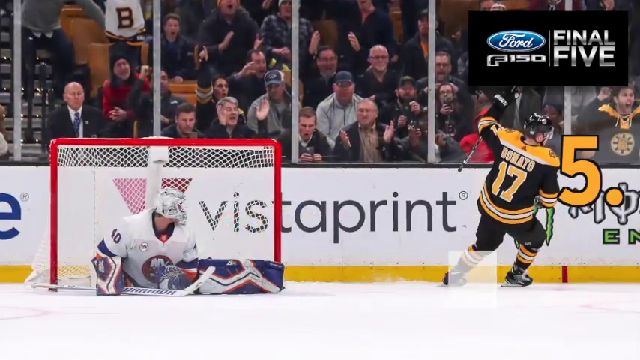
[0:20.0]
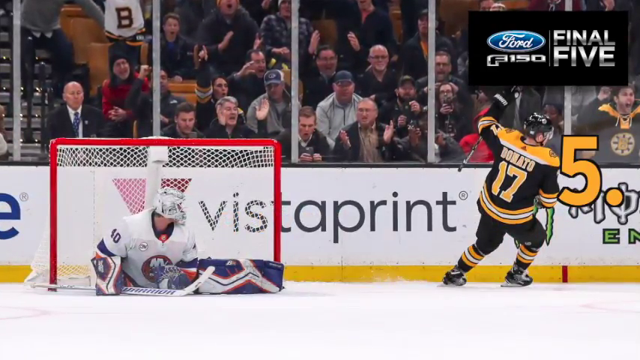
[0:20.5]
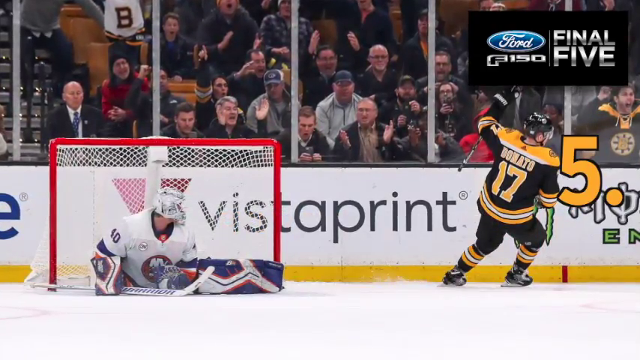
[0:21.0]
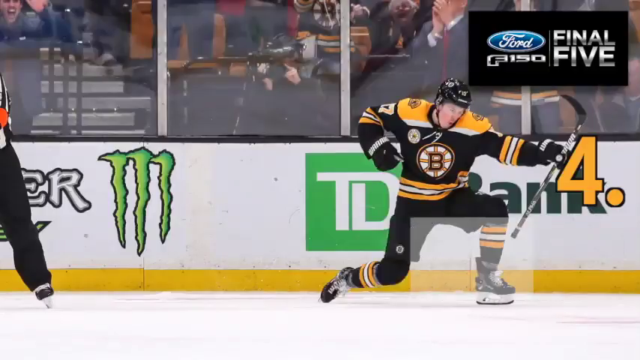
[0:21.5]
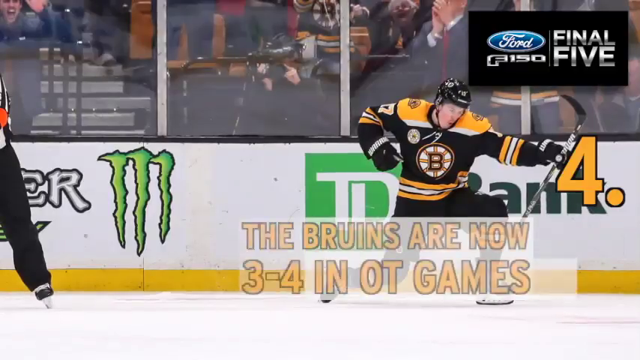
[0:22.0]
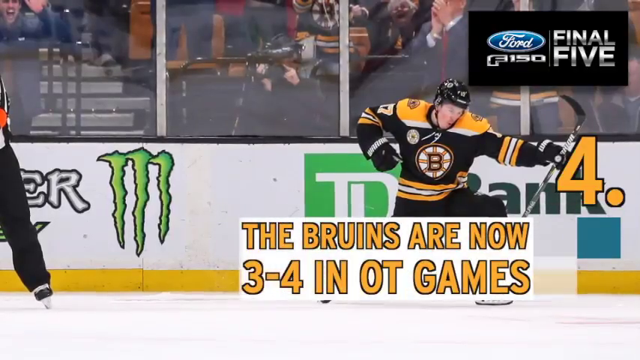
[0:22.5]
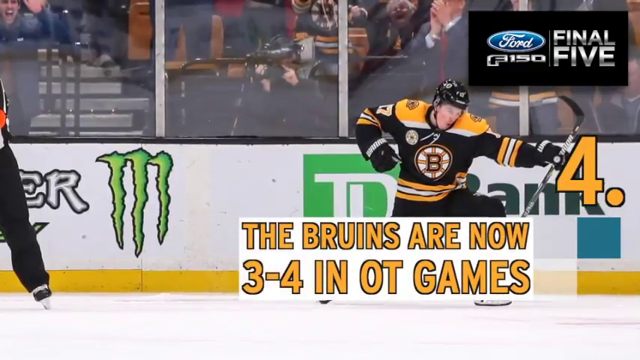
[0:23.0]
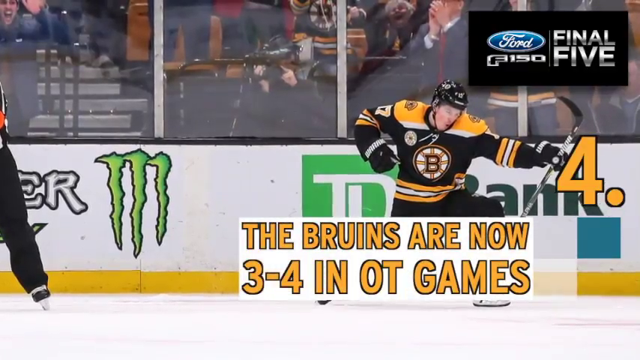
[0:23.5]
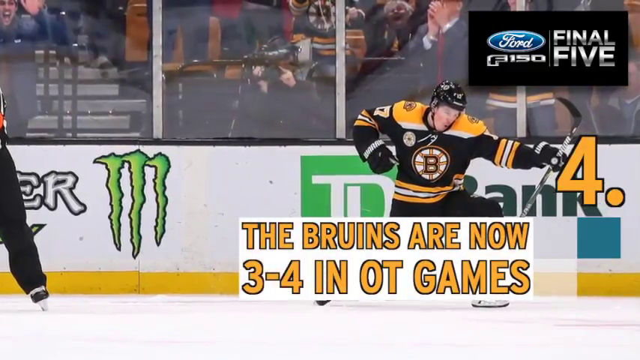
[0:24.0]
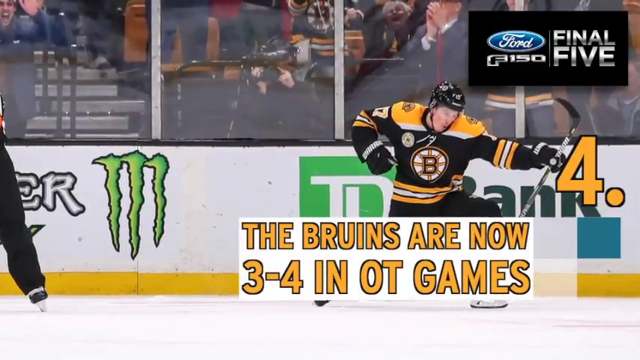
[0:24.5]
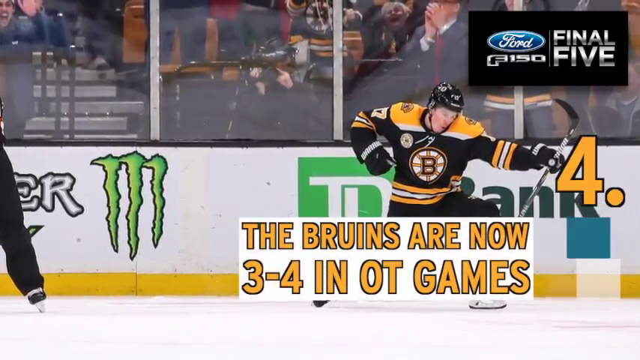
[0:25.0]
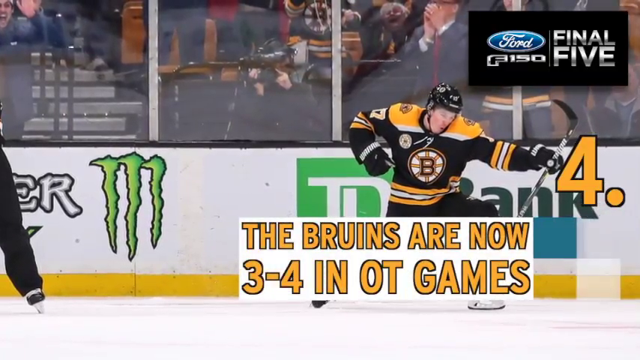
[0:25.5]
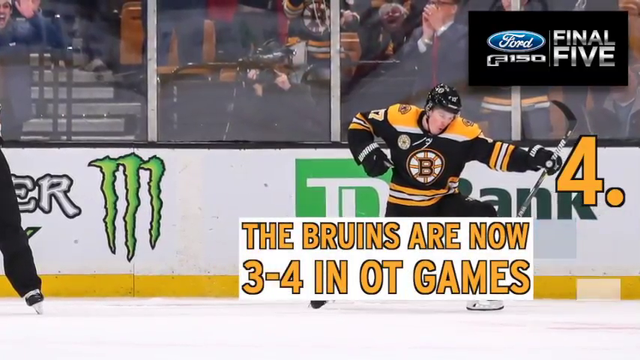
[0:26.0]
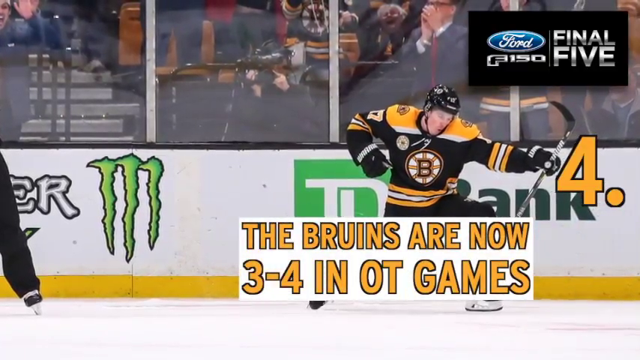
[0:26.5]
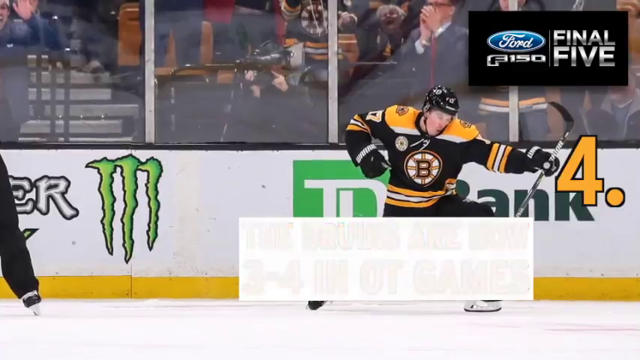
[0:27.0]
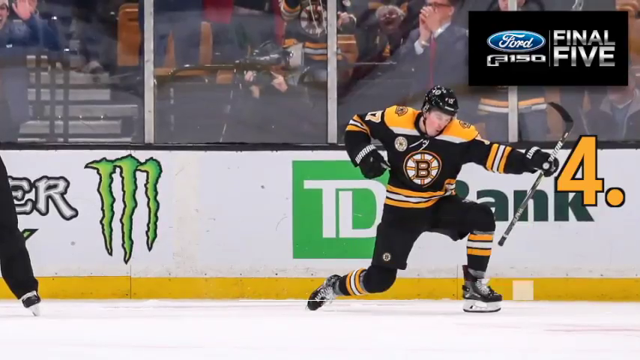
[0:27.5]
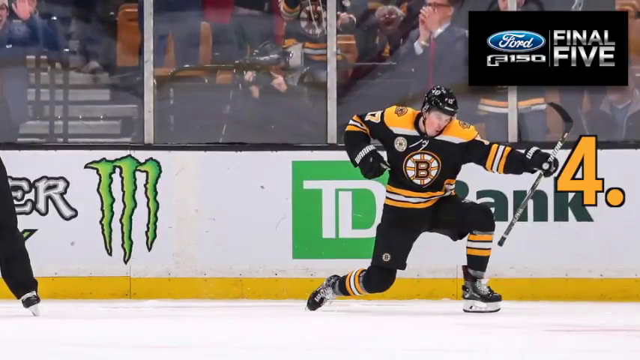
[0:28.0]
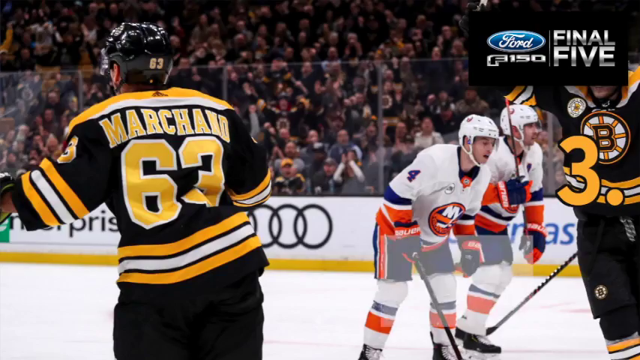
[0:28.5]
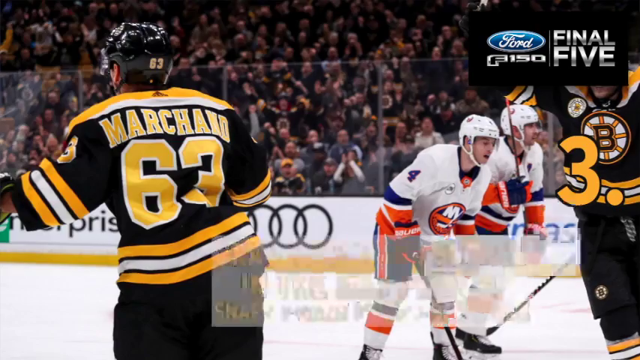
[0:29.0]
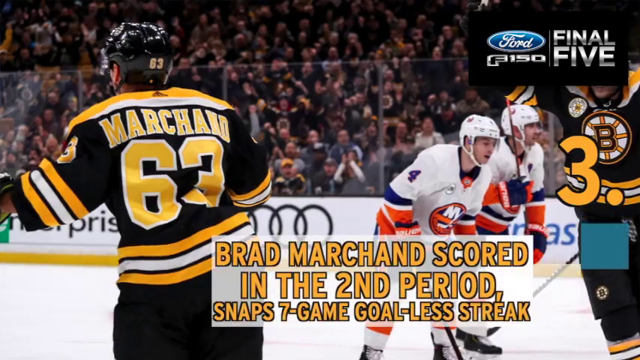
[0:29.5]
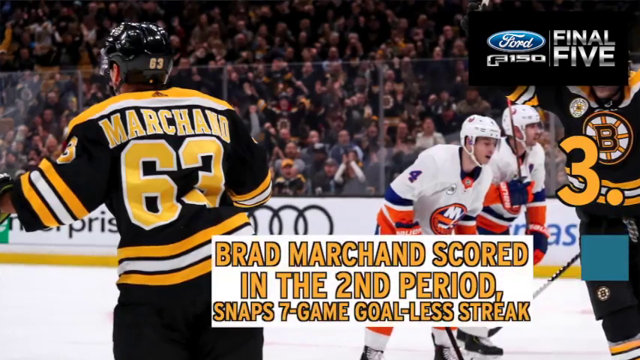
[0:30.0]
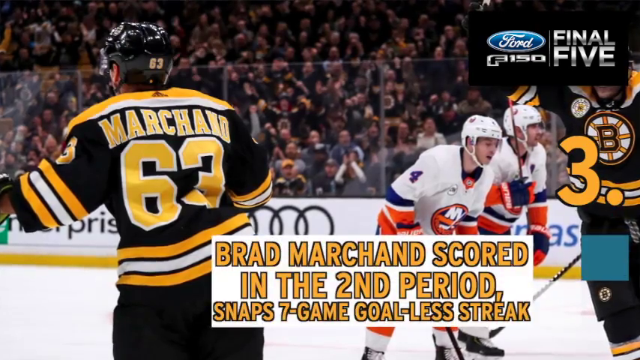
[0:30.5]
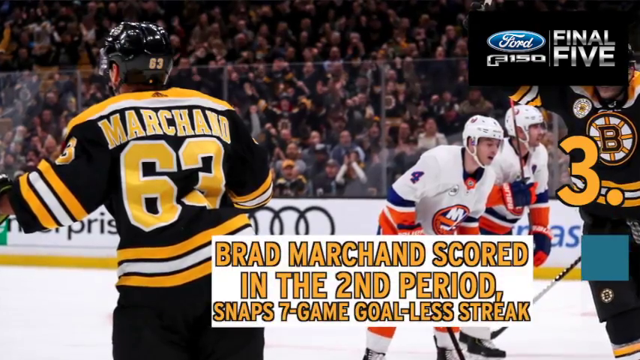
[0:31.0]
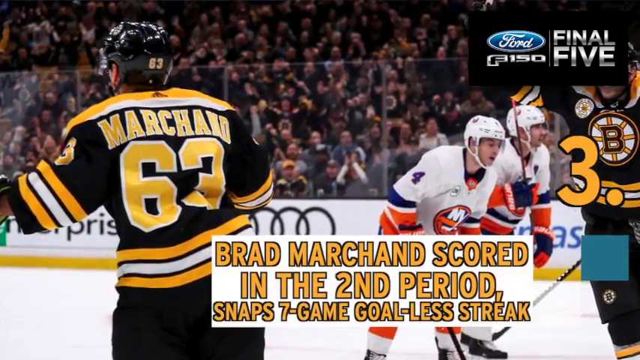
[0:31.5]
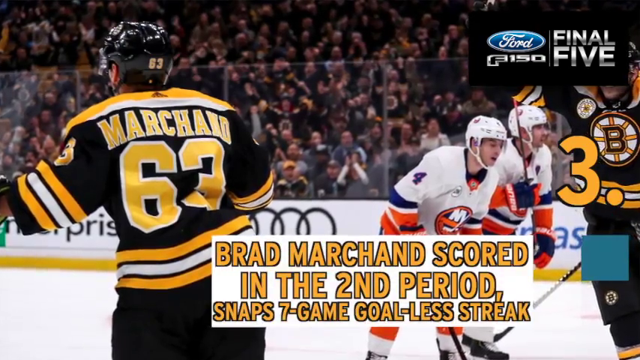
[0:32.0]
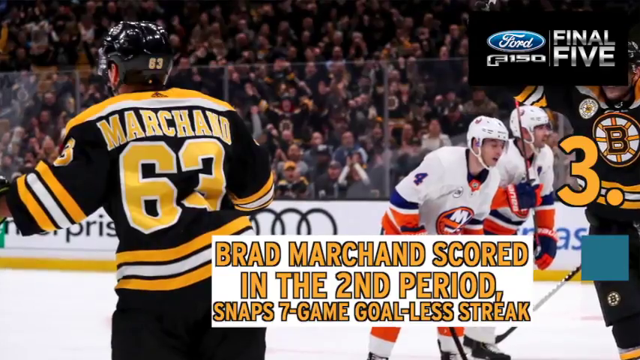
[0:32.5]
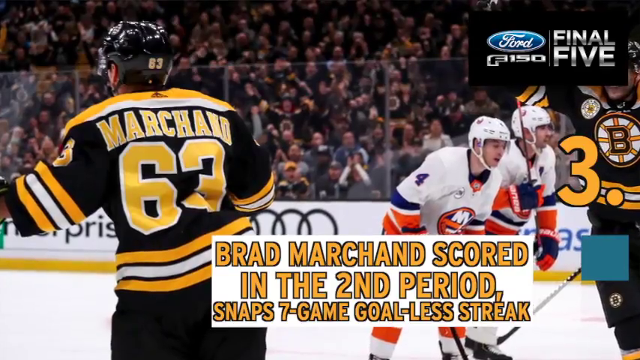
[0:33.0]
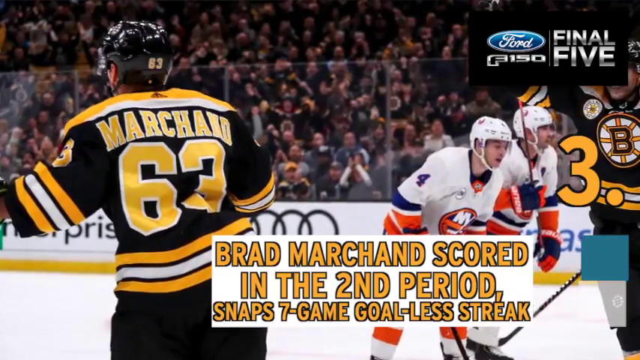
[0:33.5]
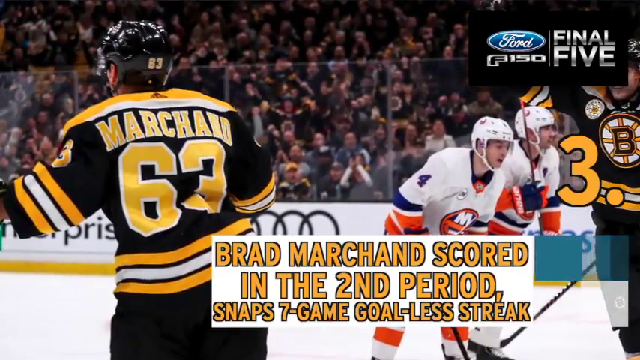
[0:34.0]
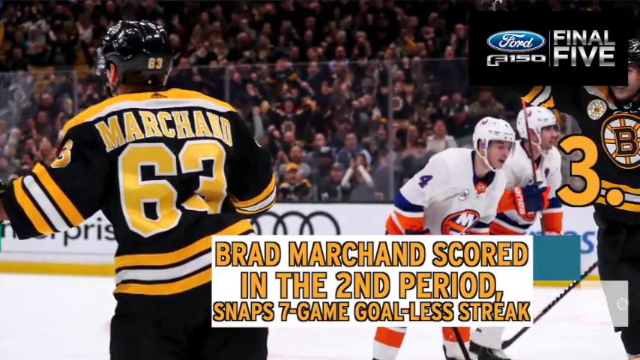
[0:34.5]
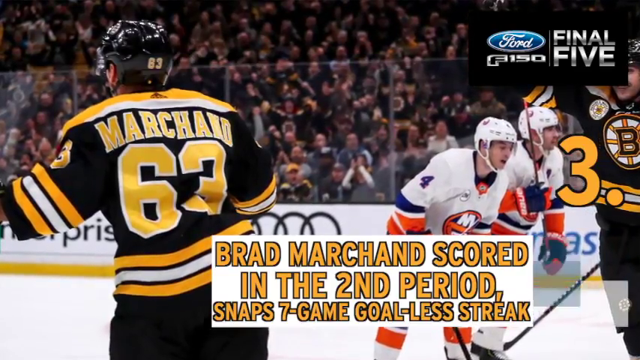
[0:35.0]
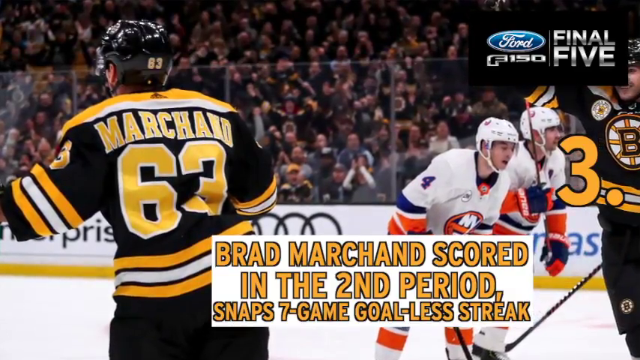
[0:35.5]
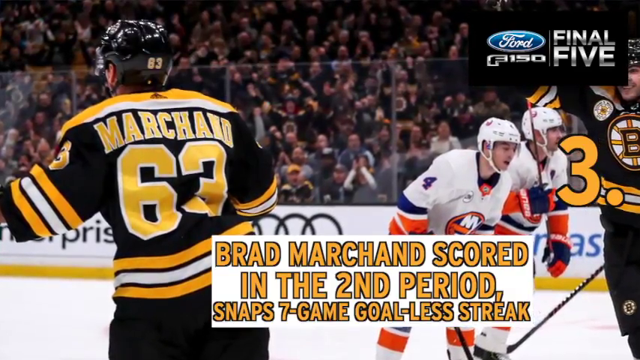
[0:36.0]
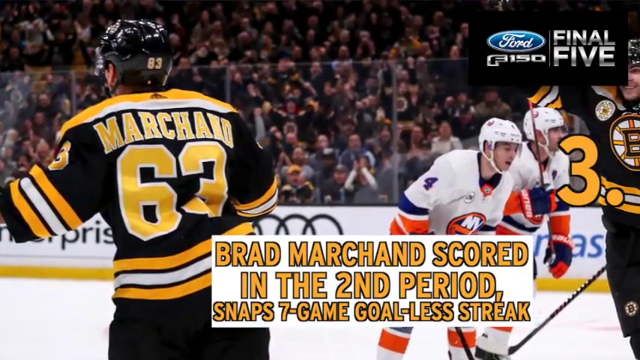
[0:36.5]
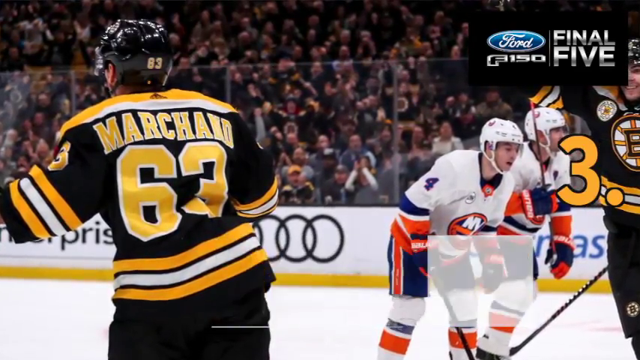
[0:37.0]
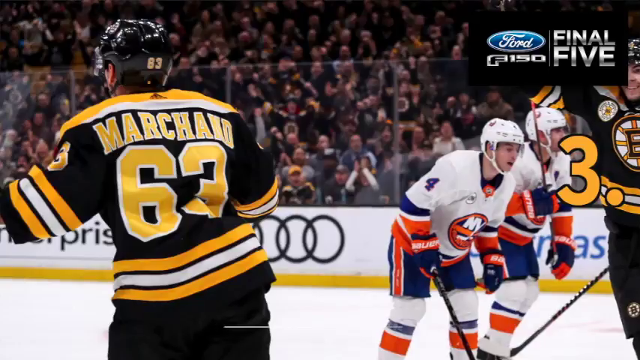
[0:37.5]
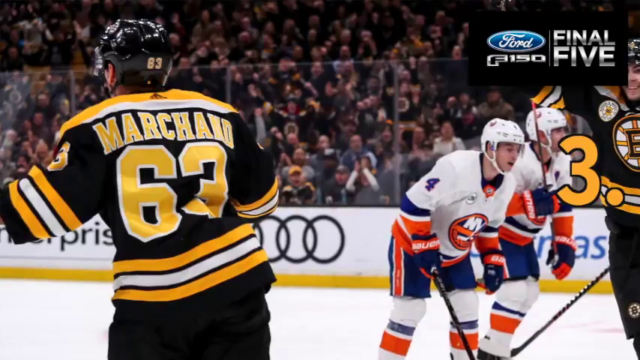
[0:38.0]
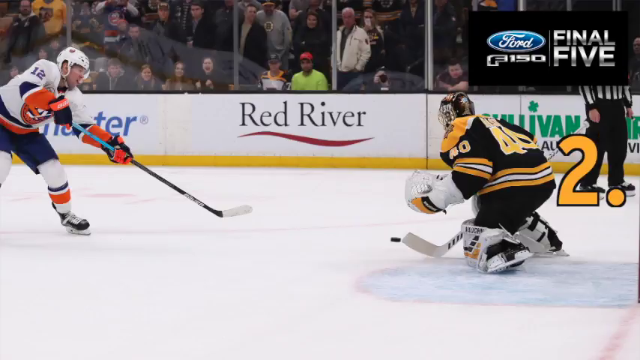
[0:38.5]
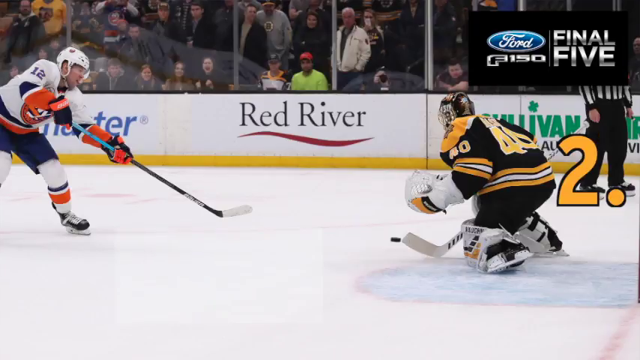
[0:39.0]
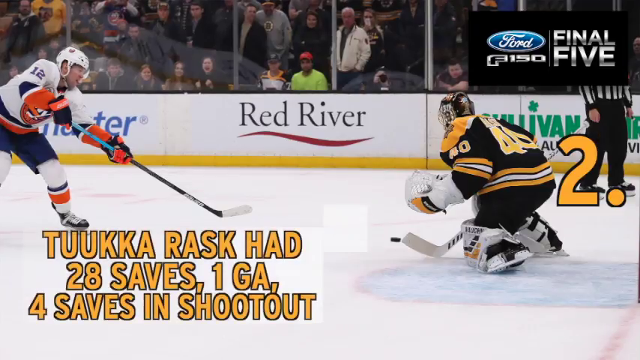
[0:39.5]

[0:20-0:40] A New York Islanders goalie is in the net, and Donato of the Bruins is on the right, seemingly skating off. Fans are in the stands behind them, and logos are around the rink, including Vista print and part of Monster Energy. In the top right, "Final Five for F-150" appears in a black square. A number 5 in yellow text with a black outline is on the right, followed by a 4. Someone on the Bruins is skating, and the ref's leg is visible. Yellow text reads "the Bruins are now 3-4 in overtime games," and the picture pans very slowly. A new picture follows with yellow text at the bottom reading "Brad Marchand scored in the 2nd period," followed by text about a 7-game streak. The back of Marchand's jersey, number 63, is on the left, a couple of Islanders players are on the right, and another Bruins player is shown from the front of his jersey, apparently skating toward them. The view pans into the picture.